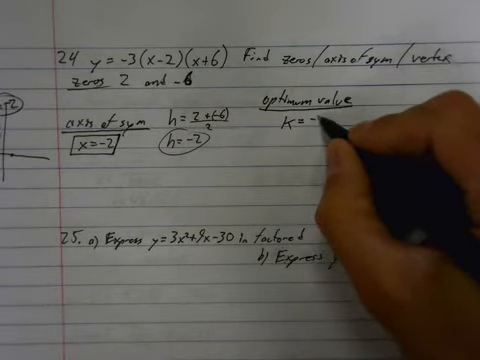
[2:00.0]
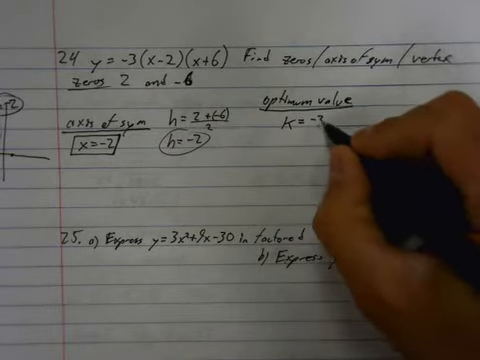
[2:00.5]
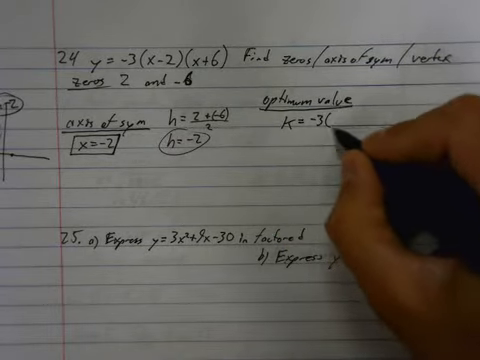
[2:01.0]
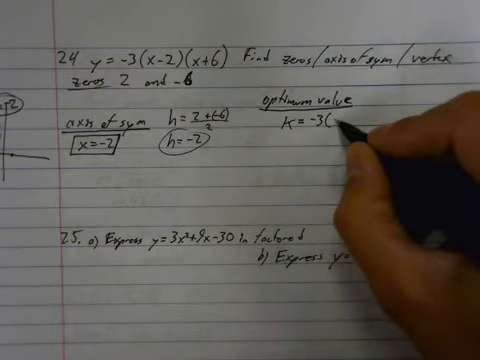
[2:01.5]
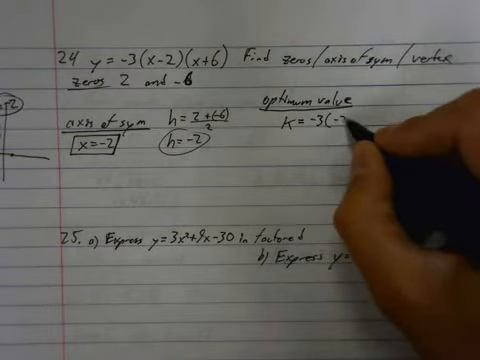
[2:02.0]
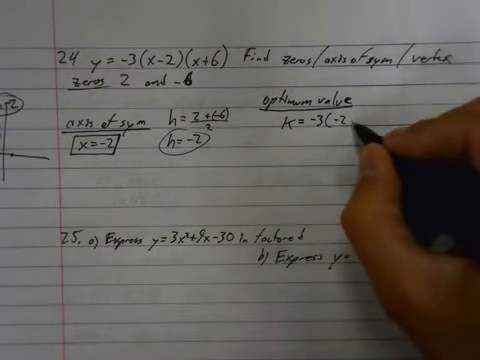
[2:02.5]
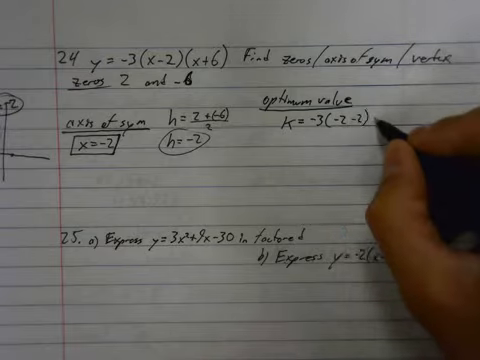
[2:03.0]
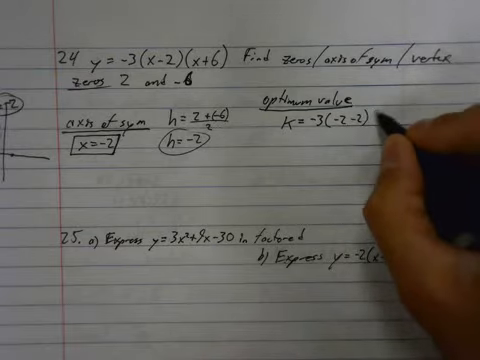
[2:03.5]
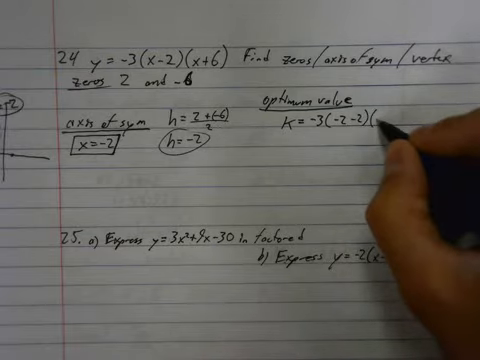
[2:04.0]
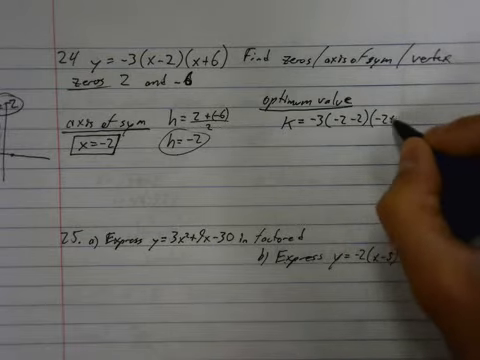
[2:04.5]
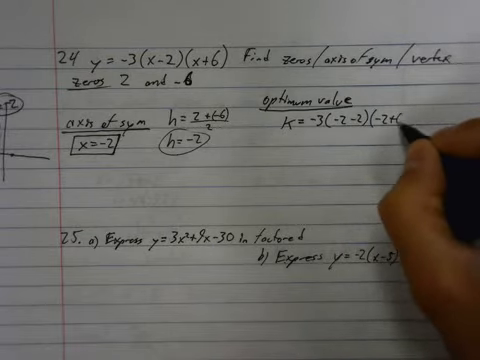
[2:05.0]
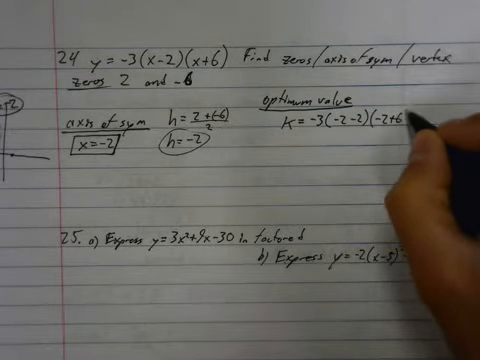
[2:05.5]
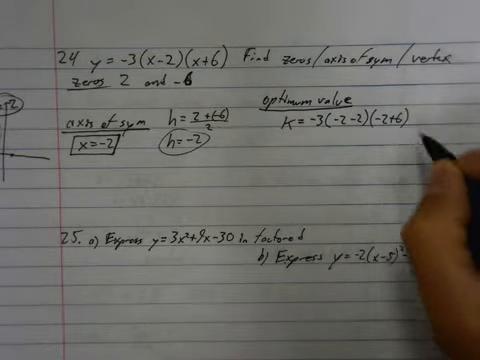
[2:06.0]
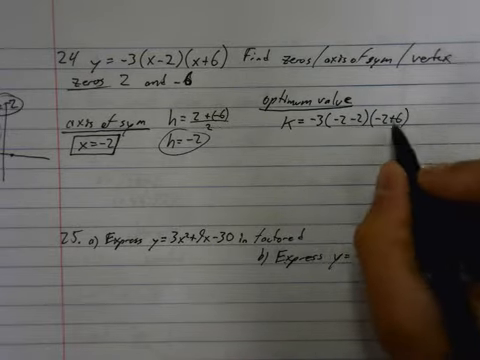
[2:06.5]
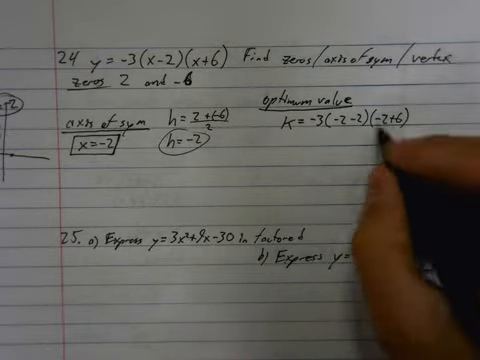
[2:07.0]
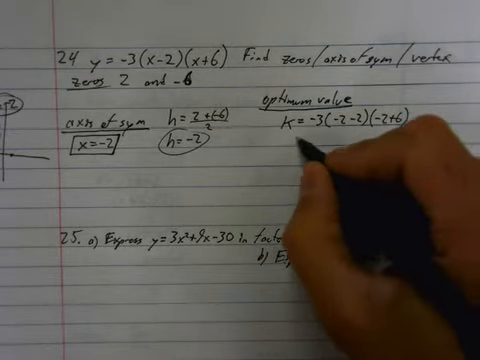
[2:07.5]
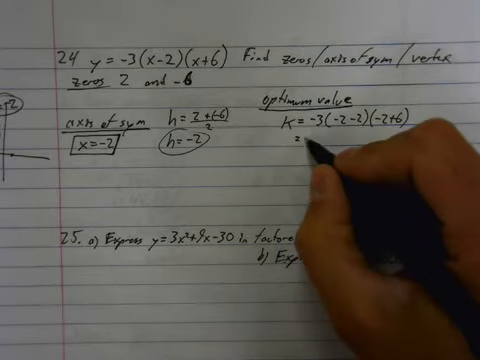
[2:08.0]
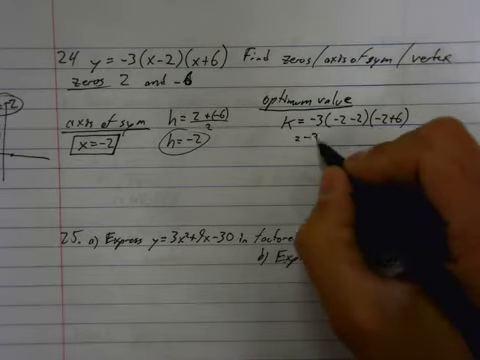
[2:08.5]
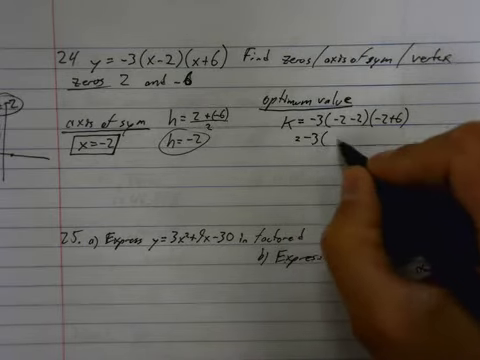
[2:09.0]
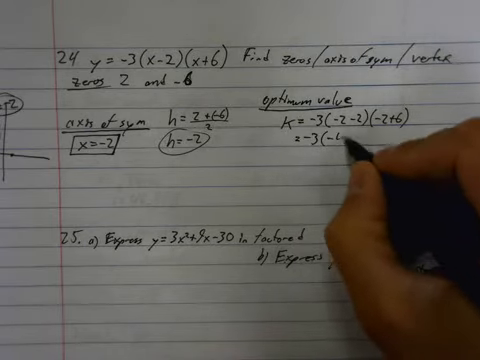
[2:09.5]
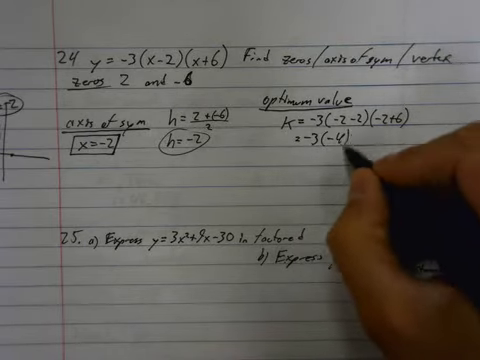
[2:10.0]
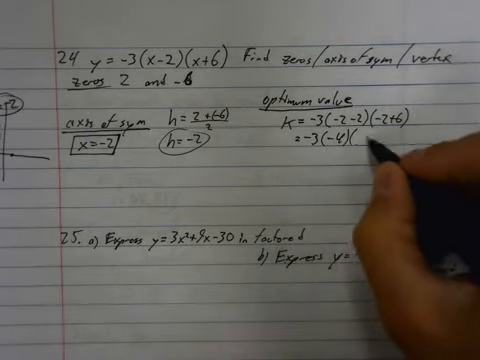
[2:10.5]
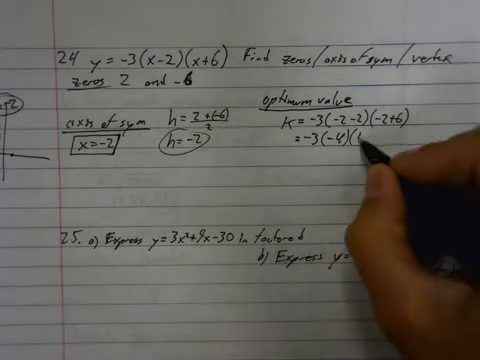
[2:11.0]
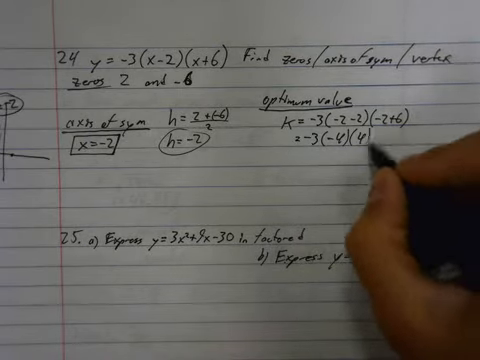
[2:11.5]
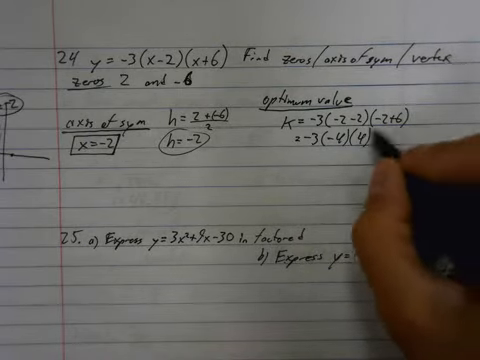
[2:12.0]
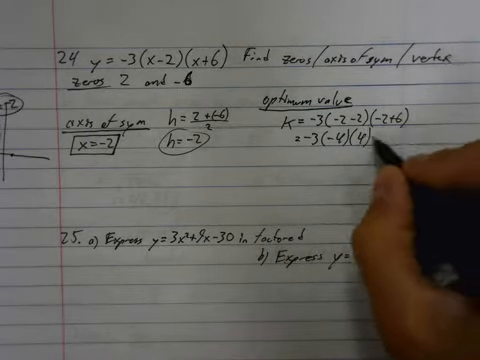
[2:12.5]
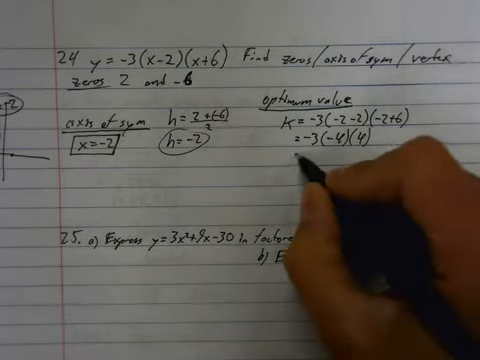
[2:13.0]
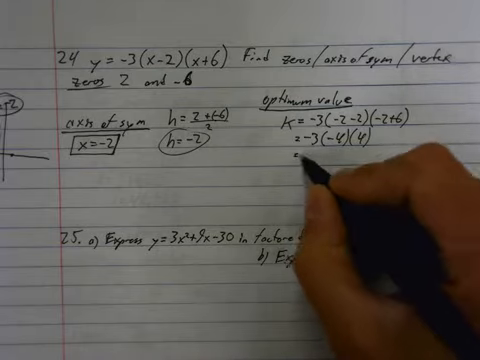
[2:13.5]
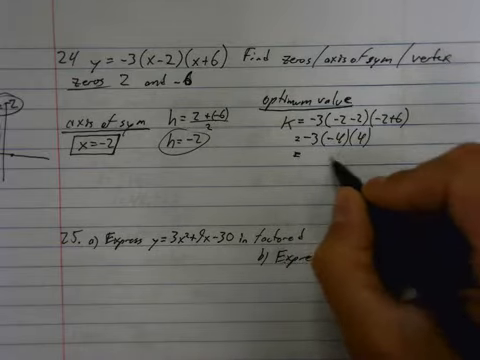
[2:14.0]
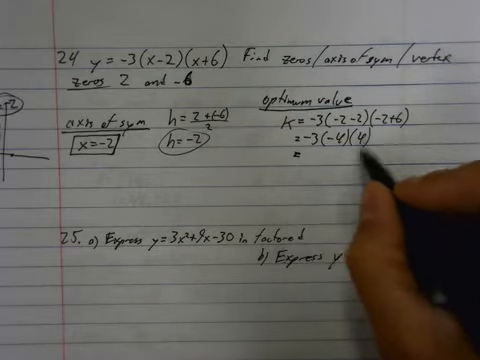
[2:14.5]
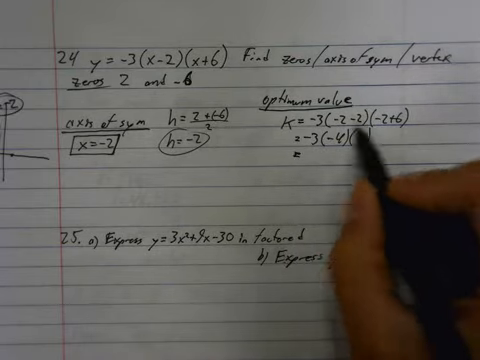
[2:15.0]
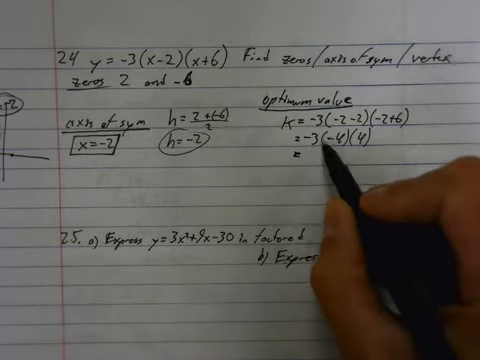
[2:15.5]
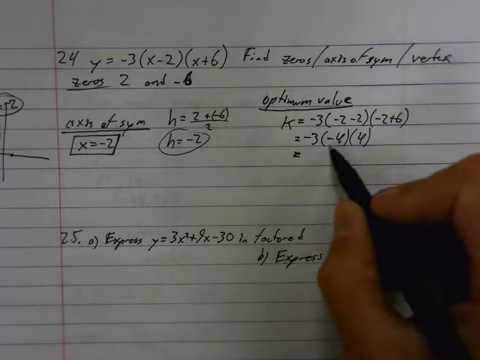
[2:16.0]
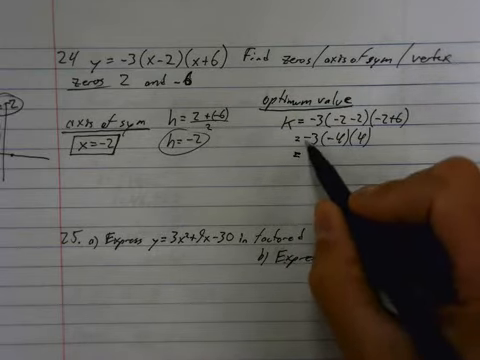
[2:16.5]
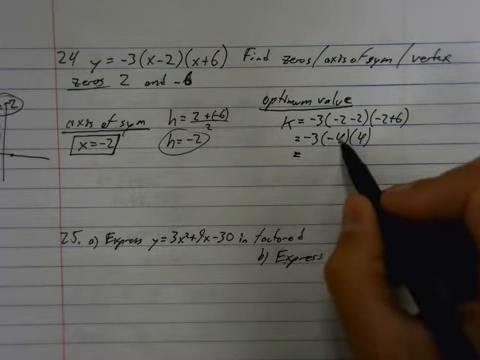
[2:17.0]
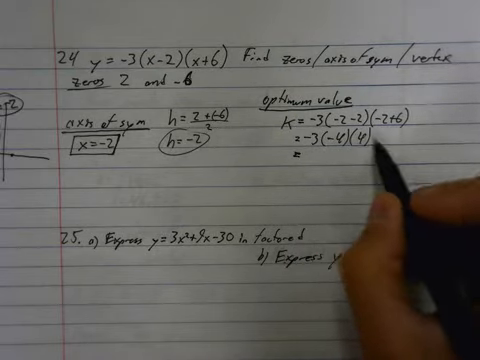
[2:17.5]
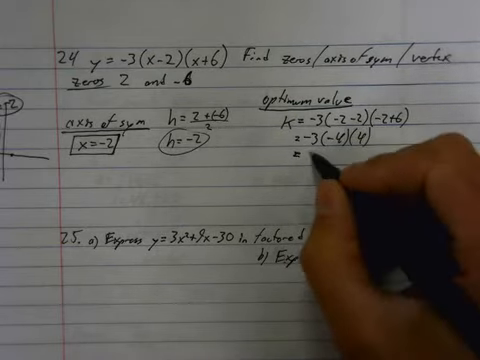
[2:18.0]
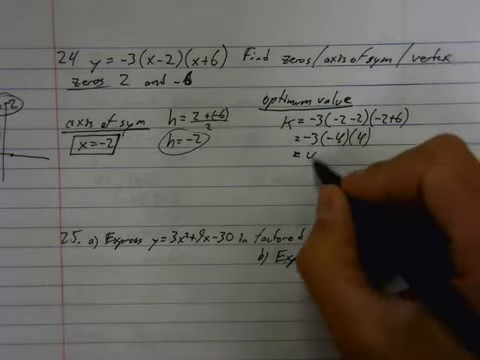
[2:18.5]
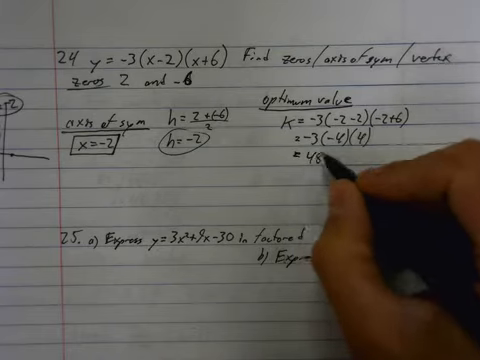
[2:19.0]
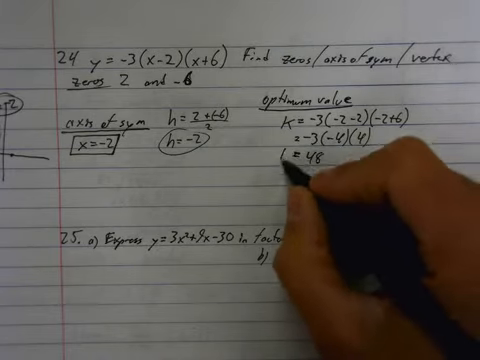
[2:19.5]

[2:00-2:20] The person continues answering the equations on the binder paper. The top reads "24 y = -3(x - 2)(x + 6) find zeros / axis of symmetry", with zeros 2 and -6. Below, in the underlined "optimum value" section, they have written "k = -3(-2 - 2)(-2 + 6)", below that "= -3(-4)(4)", then below that "= 48", and finally "k = 48", solving the optimum value for k. They write in black ink with a black pen in their right hand.